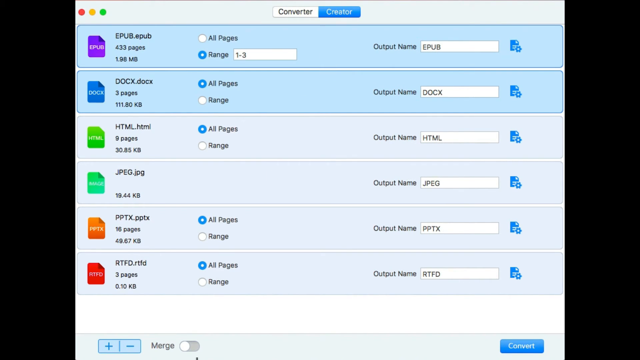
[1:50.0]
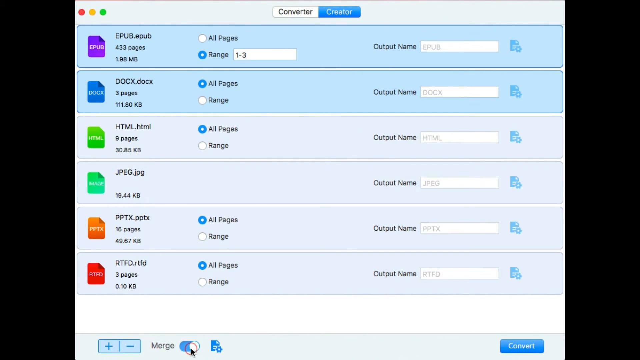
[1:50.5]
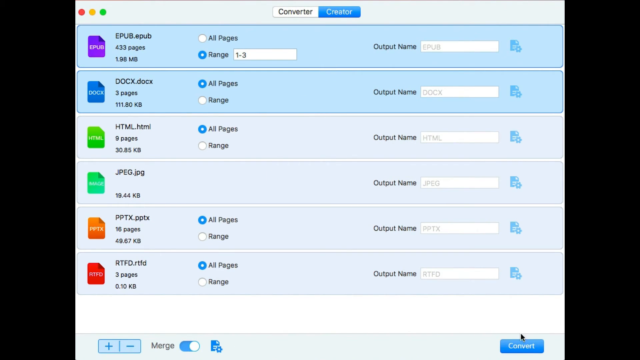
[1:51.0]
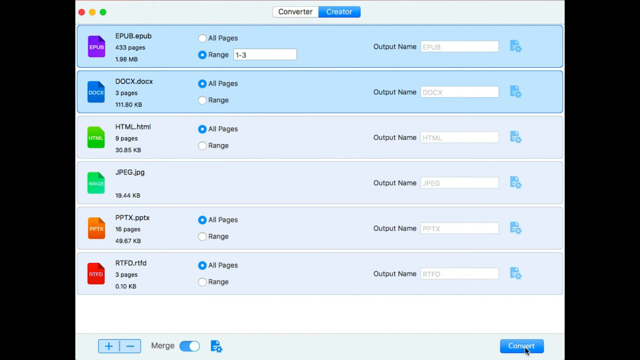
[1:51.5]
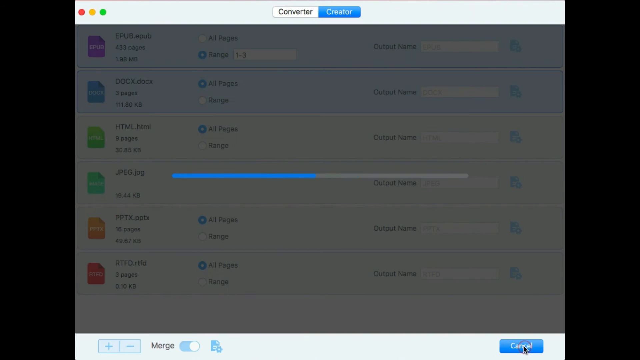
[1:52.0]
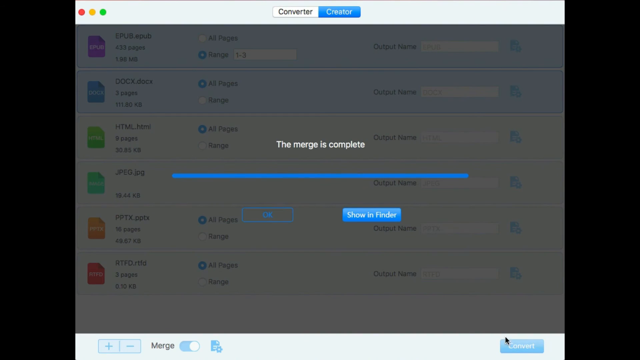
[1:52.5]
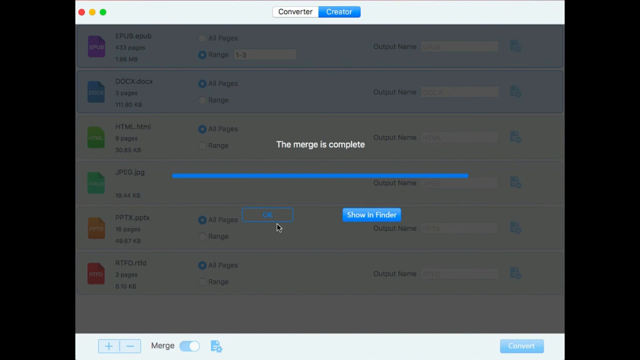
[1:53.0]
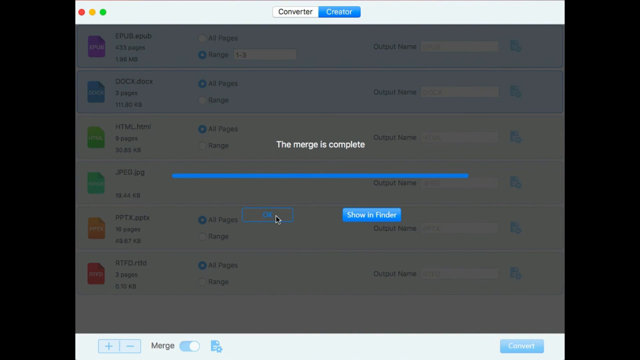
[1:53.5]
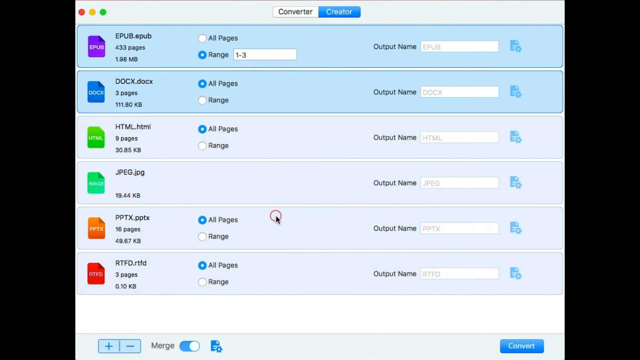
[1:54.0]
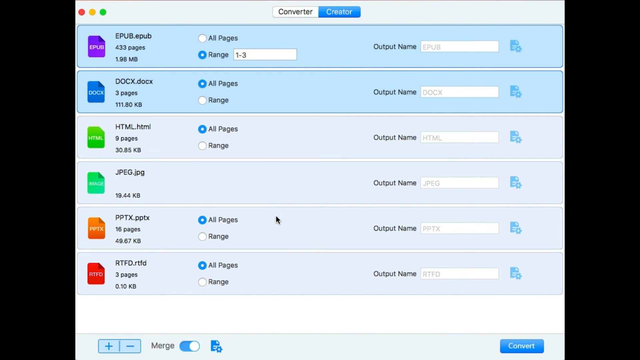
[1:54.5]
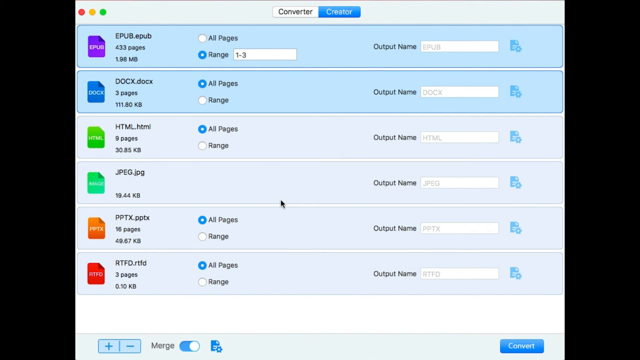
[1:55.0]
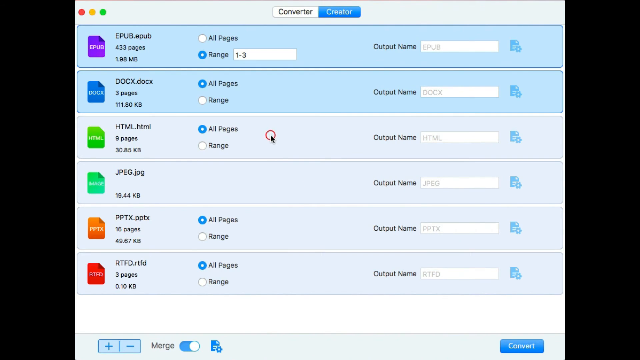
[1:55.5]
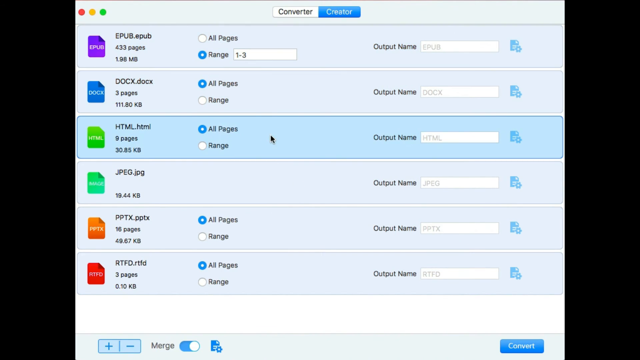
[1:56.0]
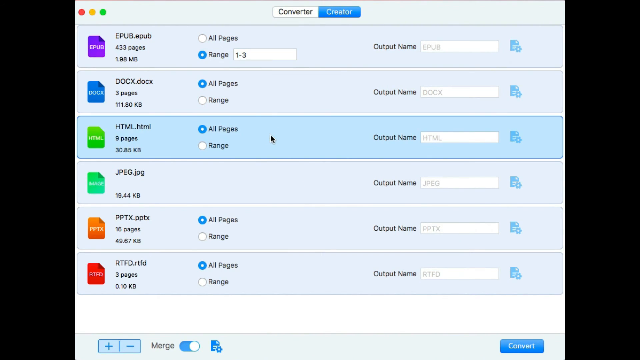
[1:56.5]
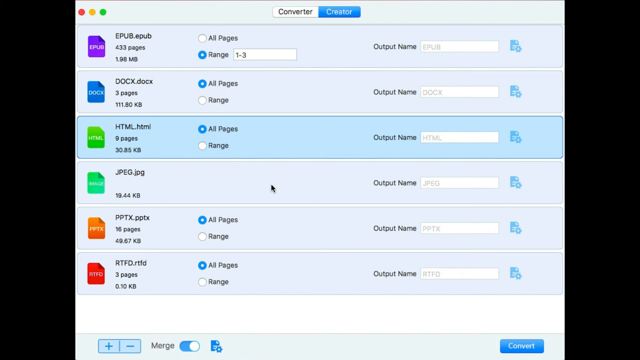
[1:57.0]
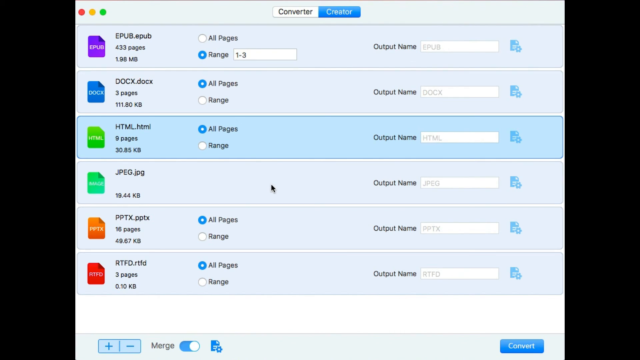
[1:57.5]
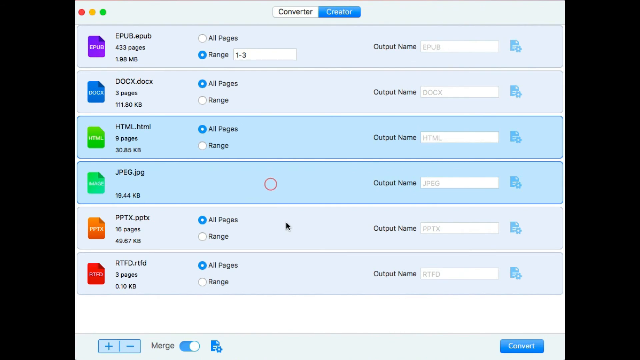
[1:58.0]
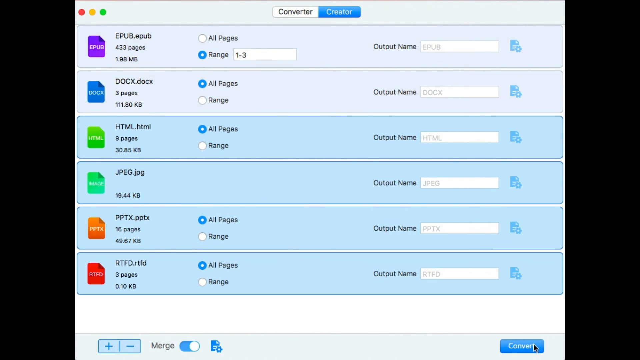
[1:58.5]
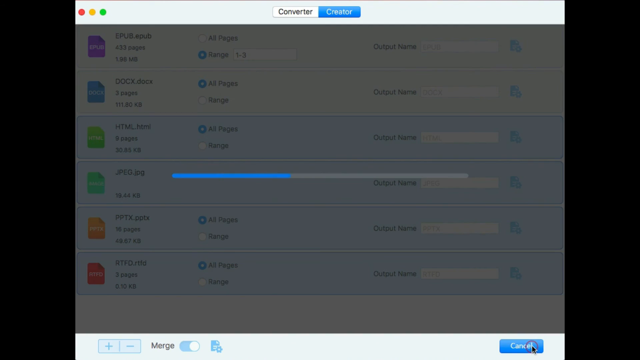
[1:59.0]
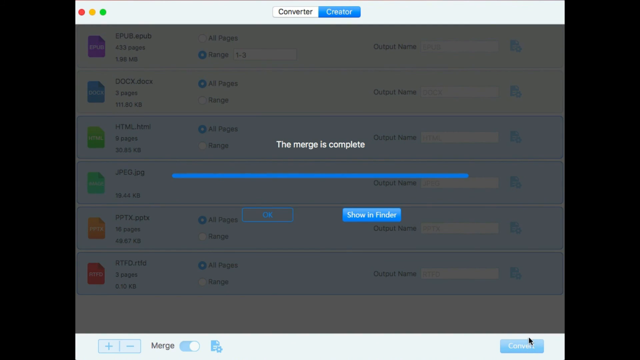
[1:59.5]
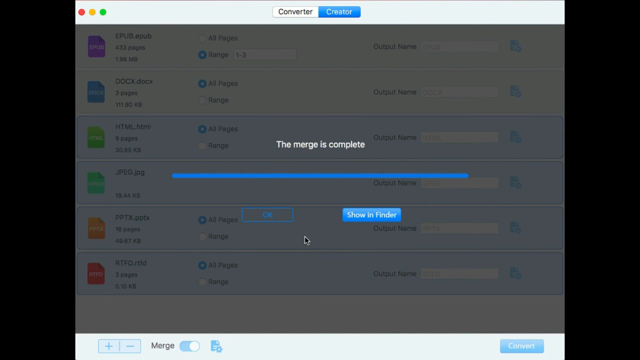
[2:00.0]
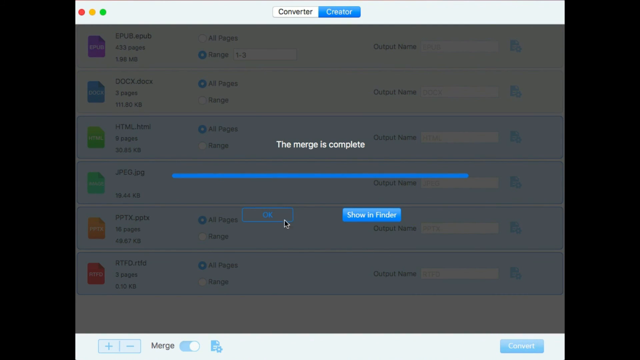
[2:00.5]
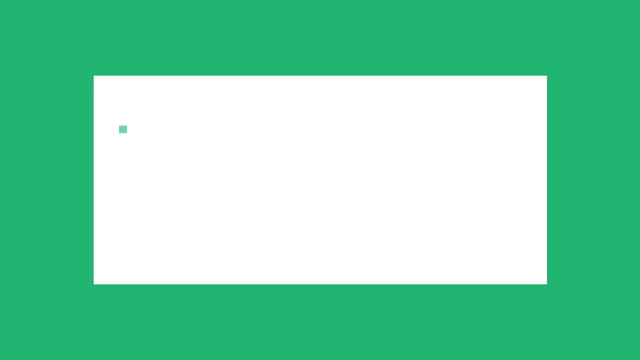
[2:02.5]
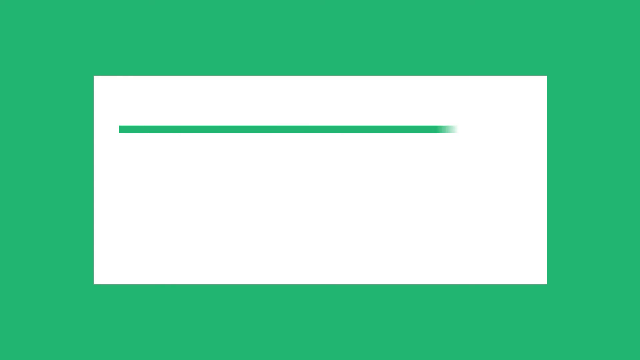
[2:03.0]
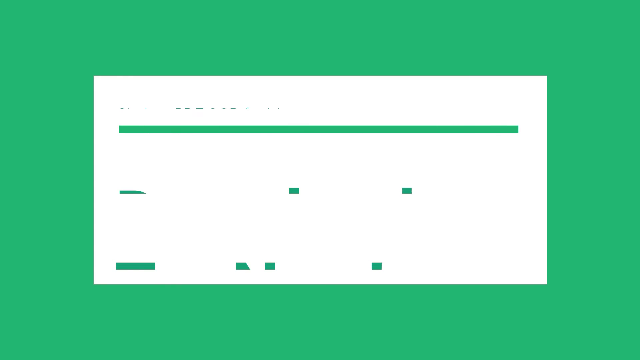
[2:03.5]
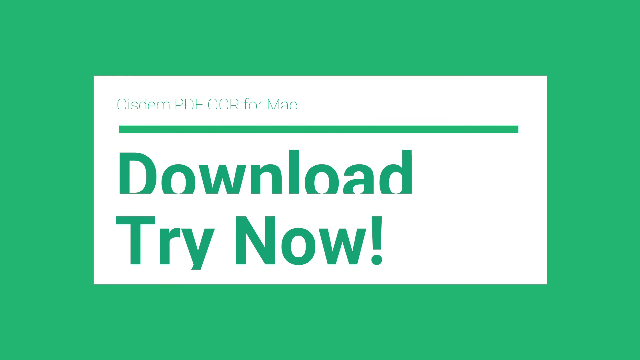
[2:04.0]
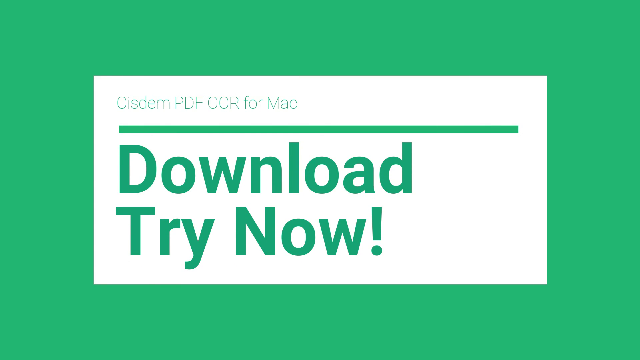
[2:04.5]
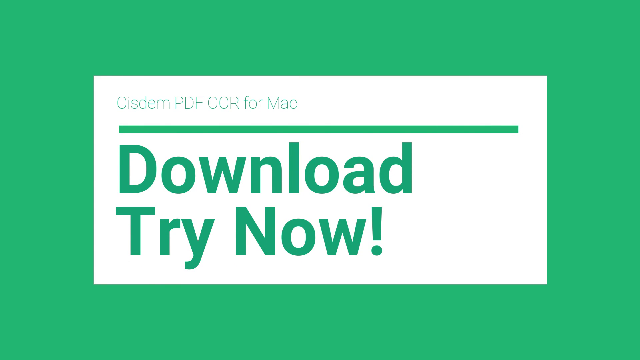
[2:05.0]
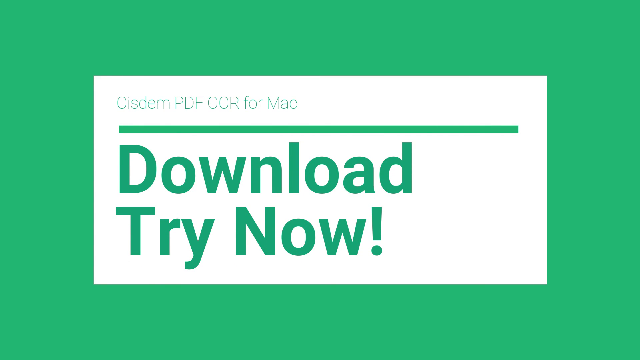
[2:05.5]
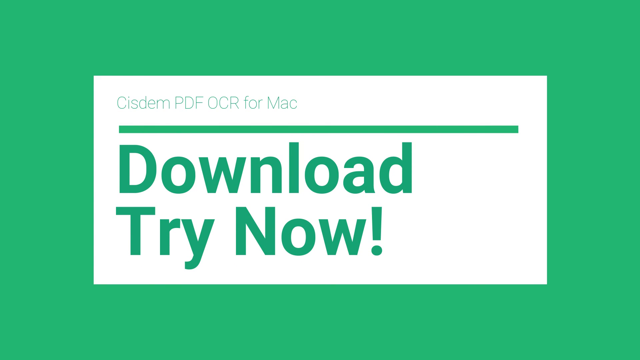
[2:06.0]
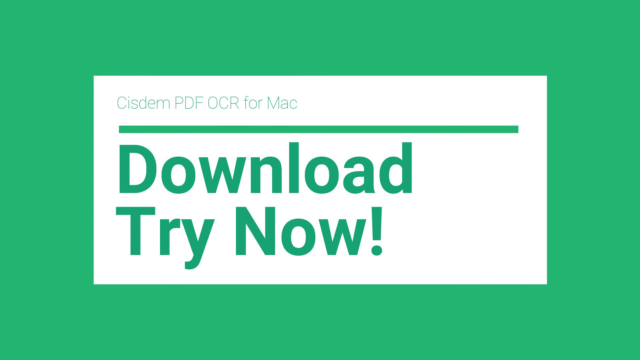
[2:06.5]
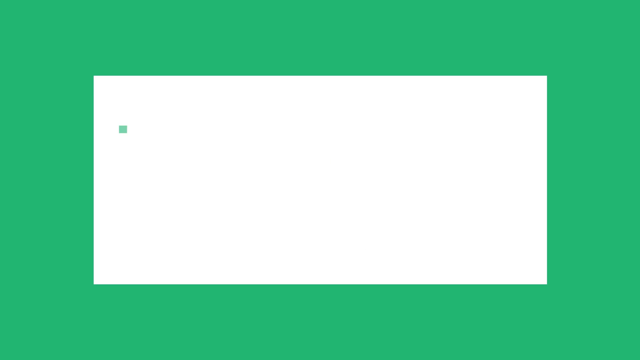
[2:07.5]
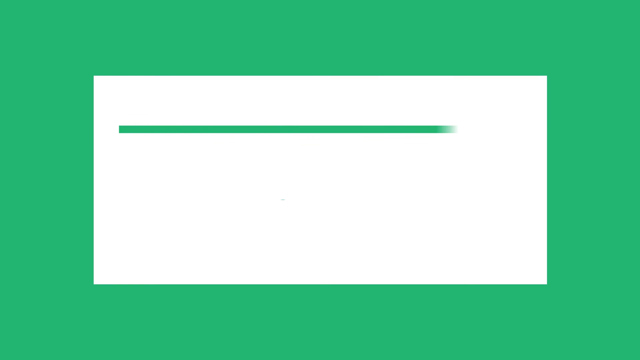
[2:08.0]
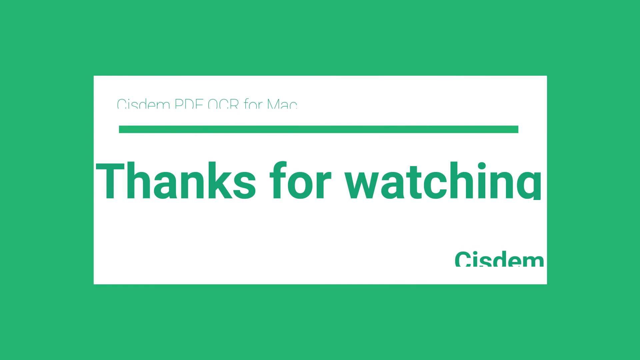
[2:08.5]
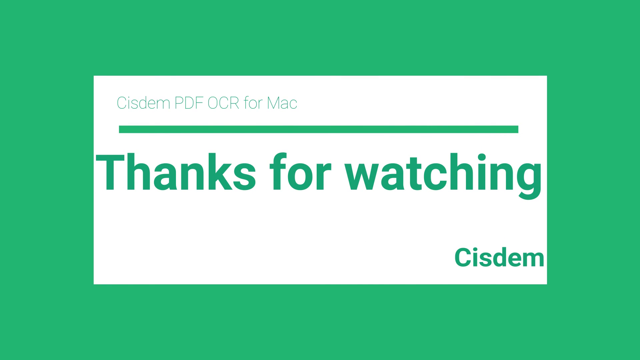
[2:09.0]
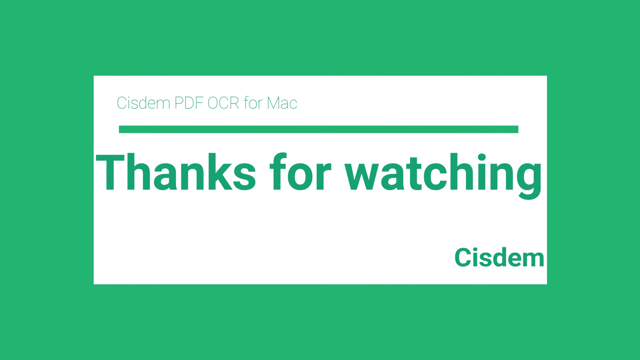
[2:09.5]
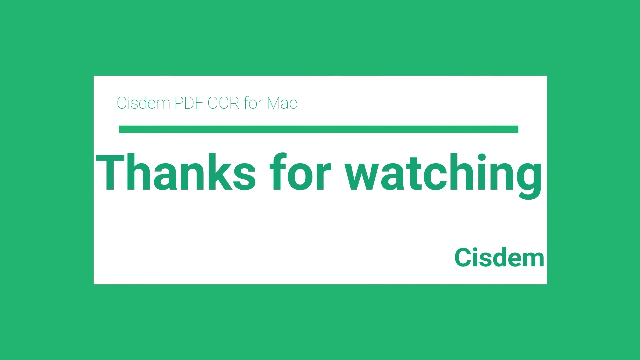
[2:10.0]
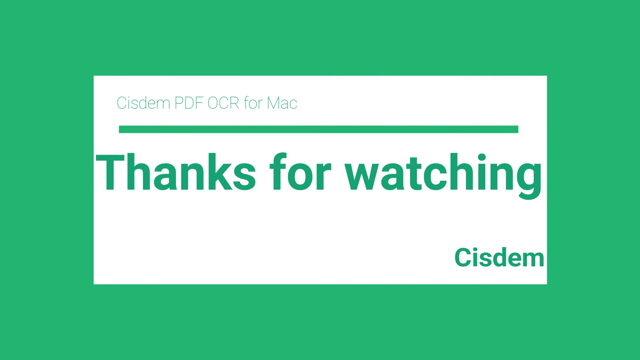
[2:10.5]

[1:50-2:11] In the creator, the man selects the first two entries, an EPUB and a DOCX file, possibly using the control key while left-clicking to select multiple rows. He clicks the convert button at the bottom, and the screen turns gray, showing a merge message with "OK" and "Show in Finder" buttons. When the merge is complete, the top says the merge is complete and the status bar is all blue. He then unselects the first and second rows, selects the third, fourth, fifth and sixth rows, and clicks the convert button to merge those files. A final screen reads "Download Try Now CisDem PDF OCR for Mac. Thanks for watching CisDem."